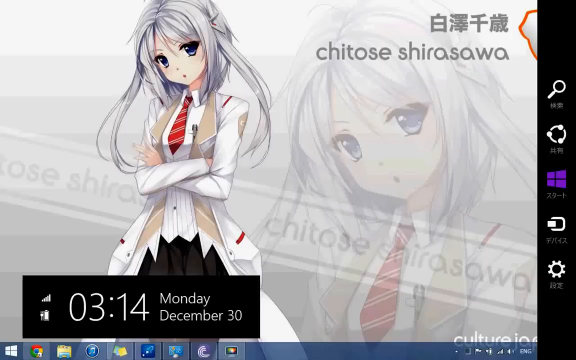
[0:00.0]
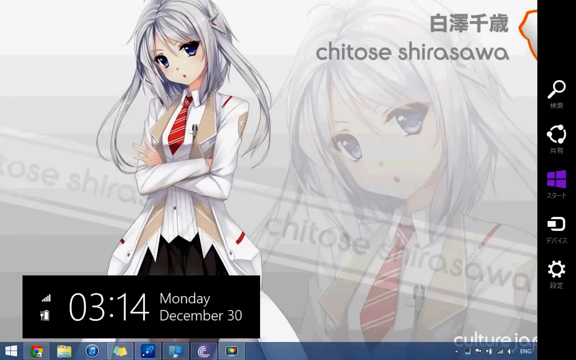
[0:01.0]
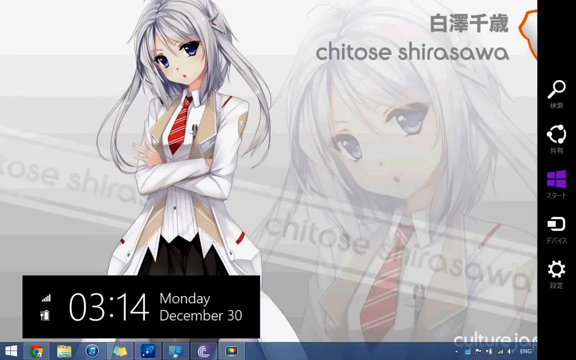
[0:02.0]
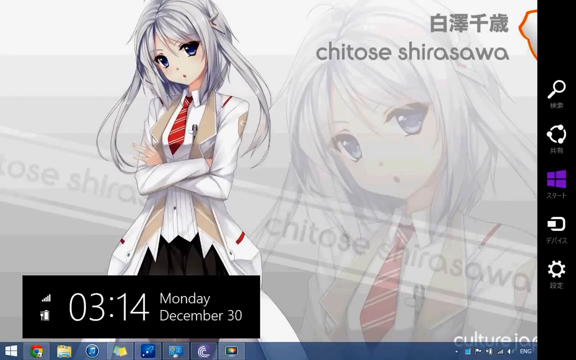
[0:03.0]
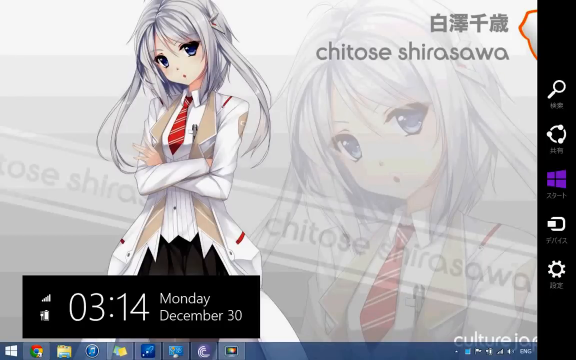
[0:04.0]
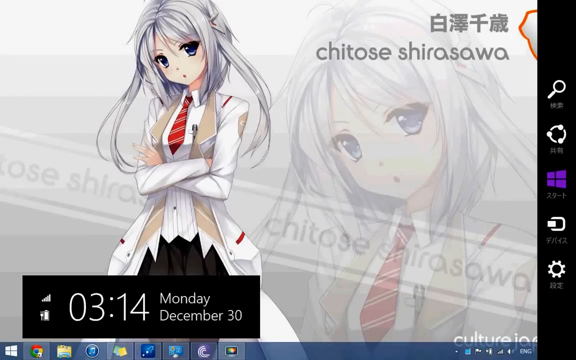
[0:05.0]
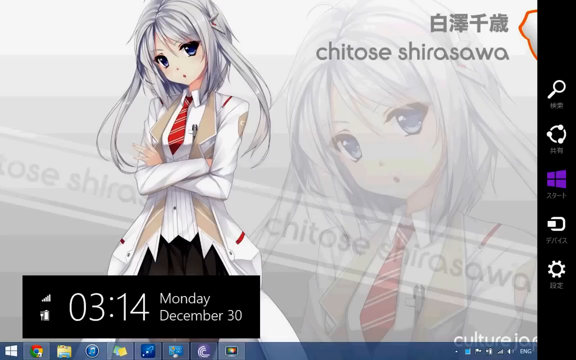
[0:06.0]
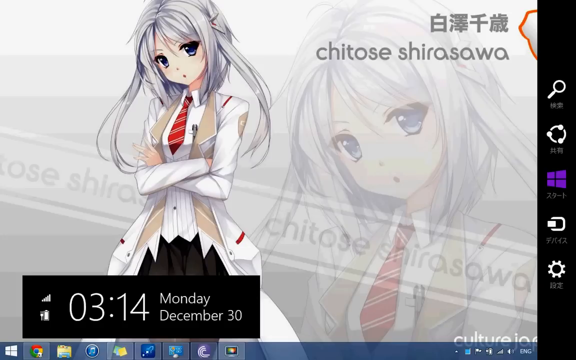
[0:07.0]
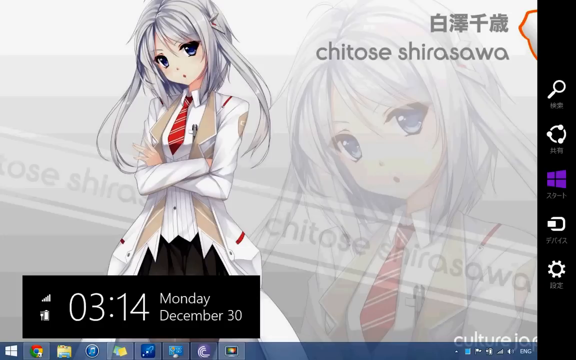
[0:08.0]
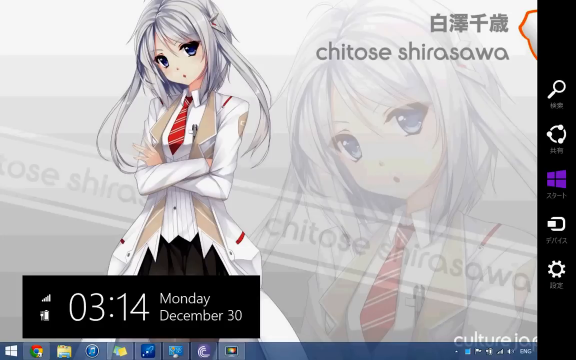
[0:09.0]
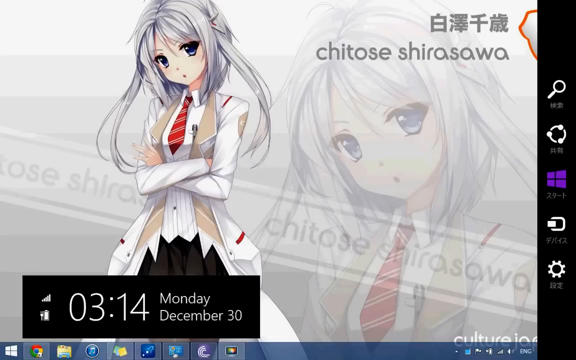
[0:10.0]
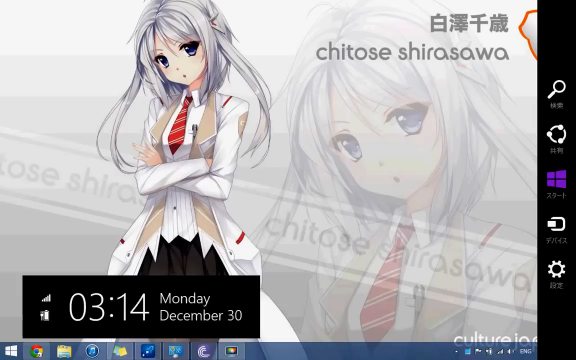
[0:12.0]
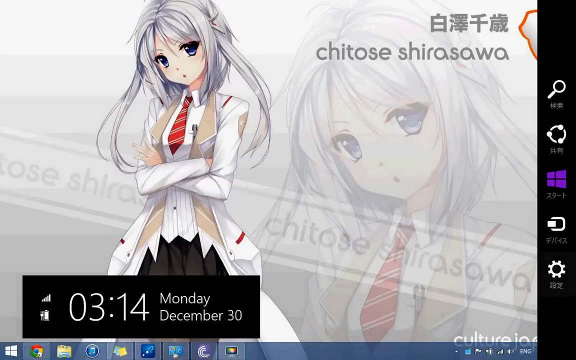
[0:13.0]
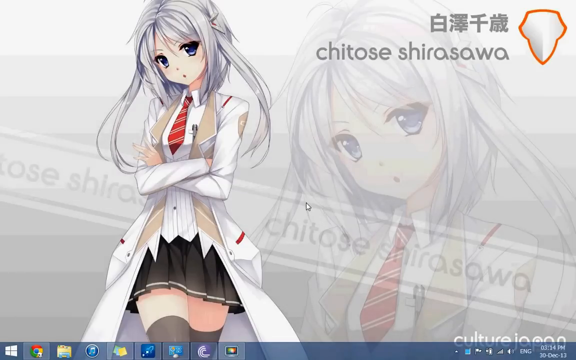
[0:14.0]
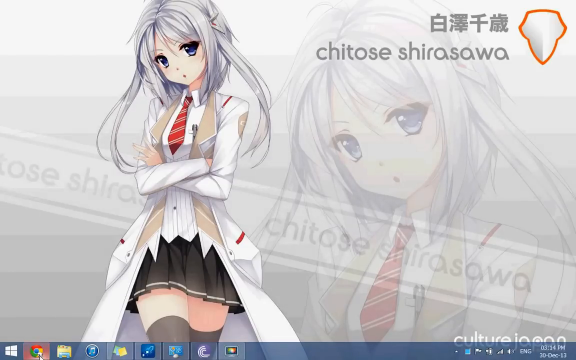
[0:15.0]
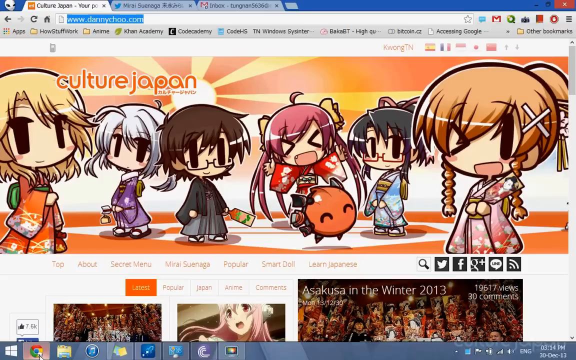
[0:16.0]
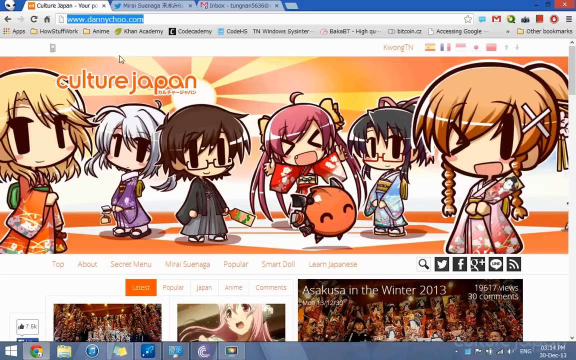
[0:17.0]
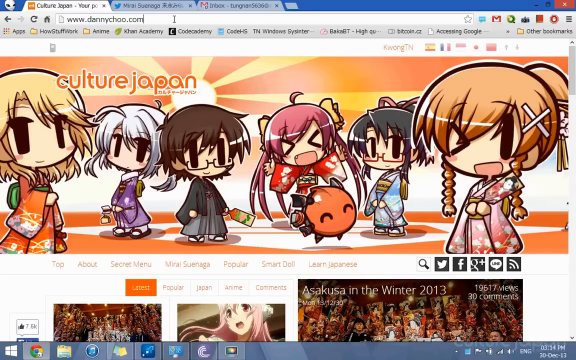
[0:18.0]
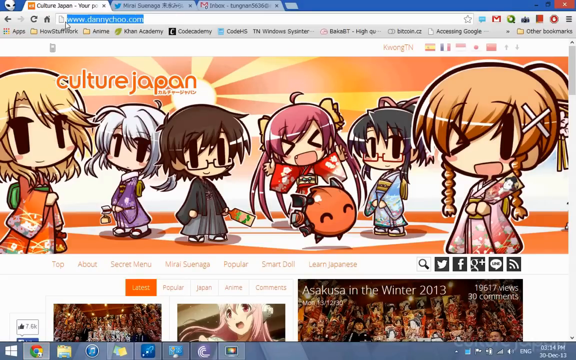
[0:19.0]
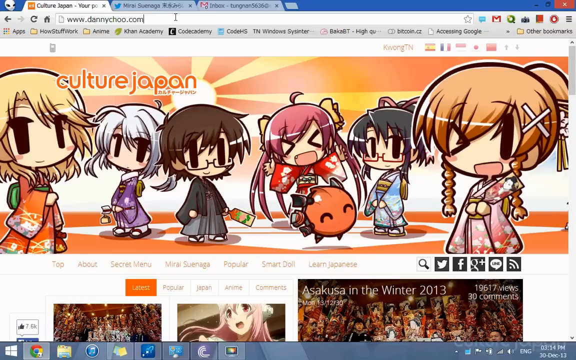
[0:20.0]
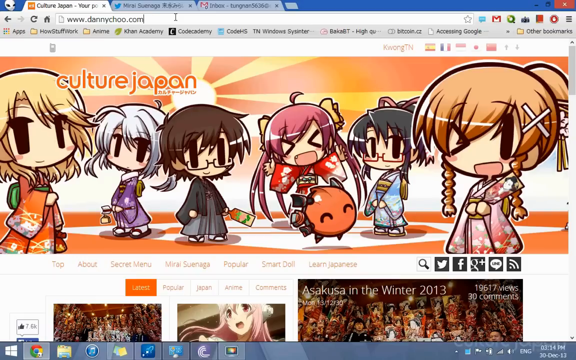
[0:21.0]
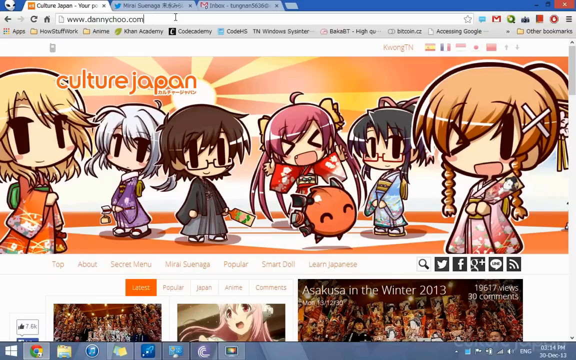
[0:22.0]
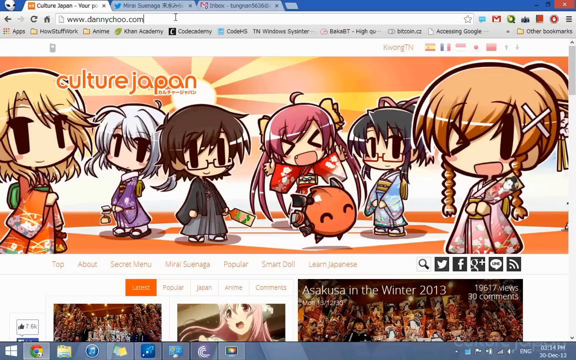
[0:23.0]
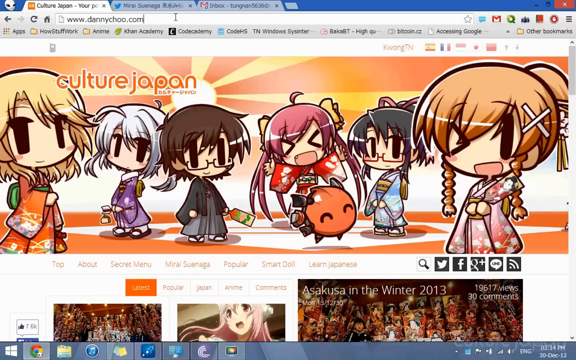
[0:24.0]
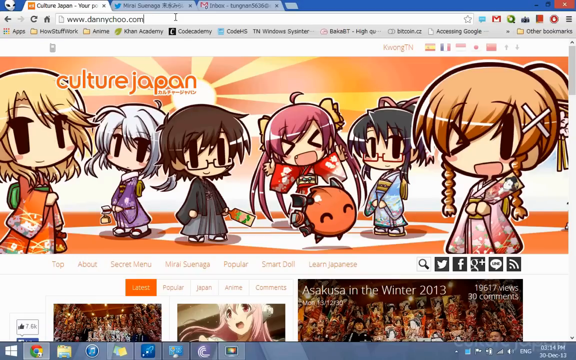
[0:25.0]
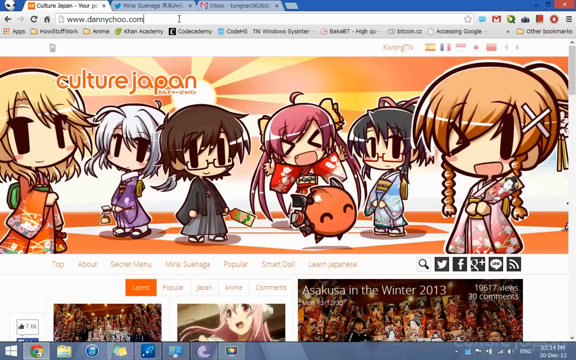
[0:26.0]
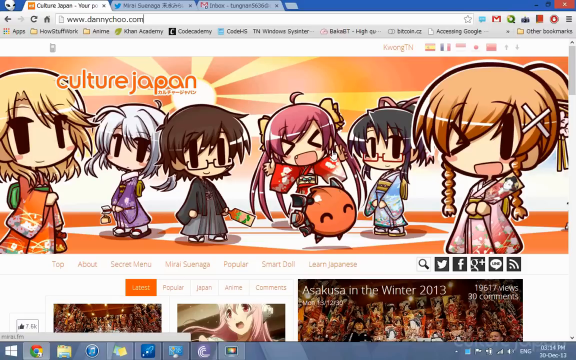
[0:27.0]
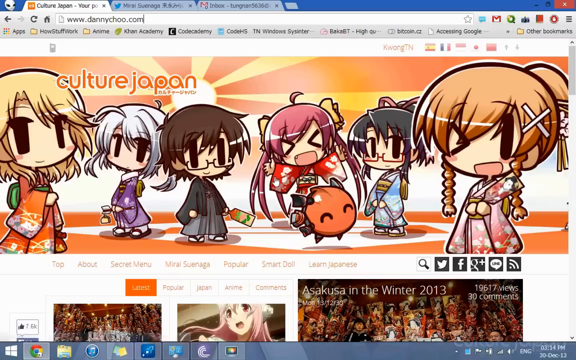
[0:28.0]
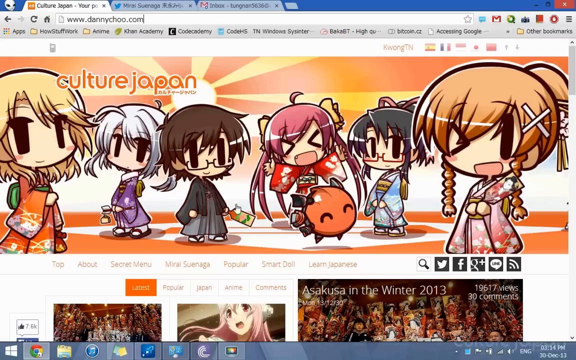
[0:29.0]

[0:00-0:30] An avatar of an anime character fills the computer screen, with the name "Chitose Shirasawa" on it. The drawing shows a girl with kind of shoulder-length gray hair, some longer sections of hair, and big blue eyes. She wears a white long-sleeve shirt and jacket with a red striped tie, has two pens in her breast pocket, and has her arms crossed. She also wears a mini skirt and, apparently, thigh-high stockings. The screen barely moves. At the beginning, a date and time reads "3-14-Monday-December-30th", and that tab eventually goes away. The image appears to be the background of a Windows computer's desktop home screen, with the Windows icon visible. The Google Chrome icon is clicked, and the website www.dannychoo.com opens, showing "Culture Japan" and a bunch of anime characters.